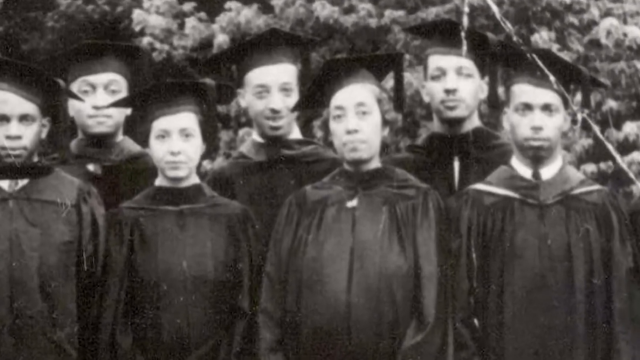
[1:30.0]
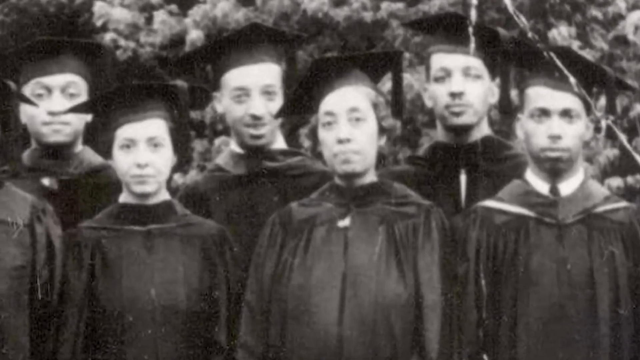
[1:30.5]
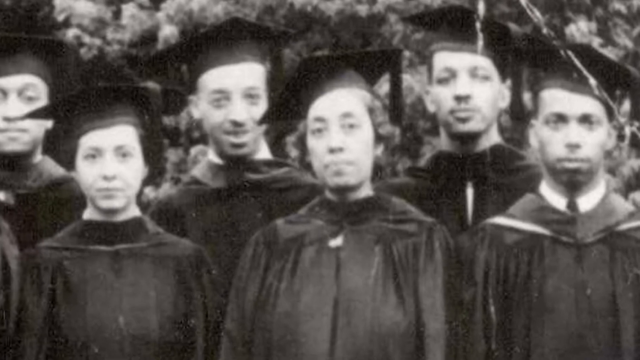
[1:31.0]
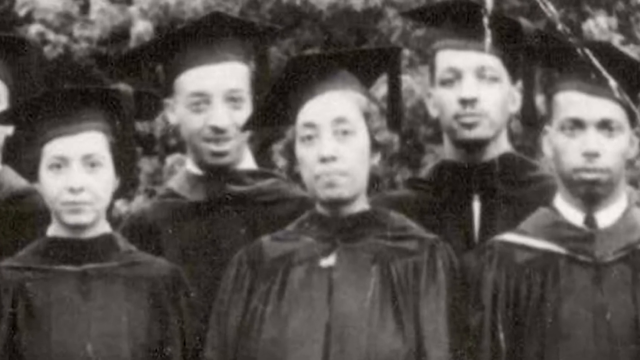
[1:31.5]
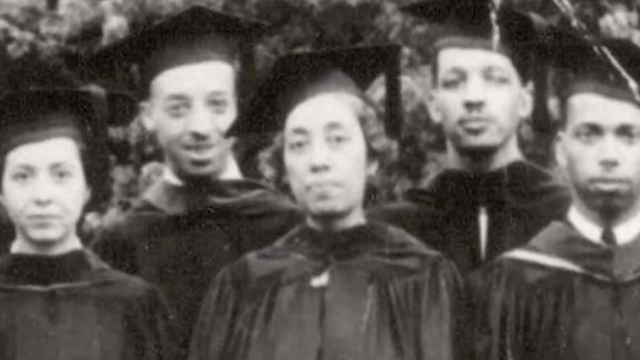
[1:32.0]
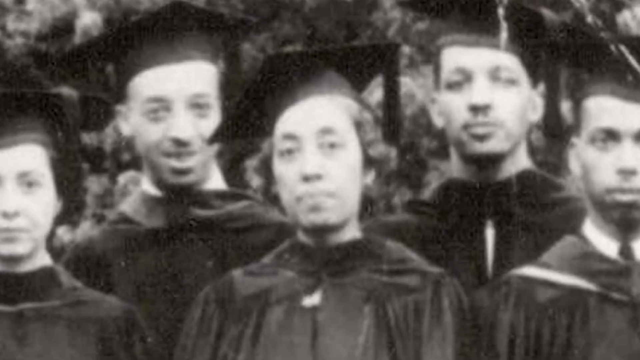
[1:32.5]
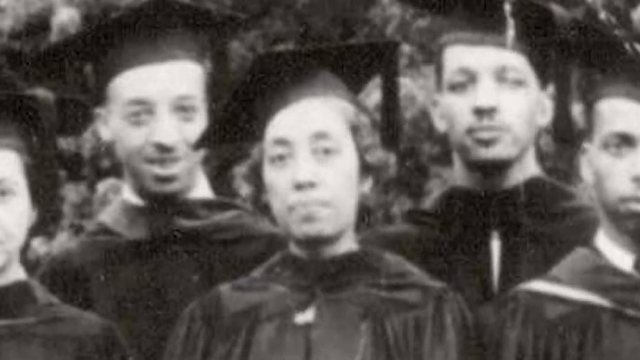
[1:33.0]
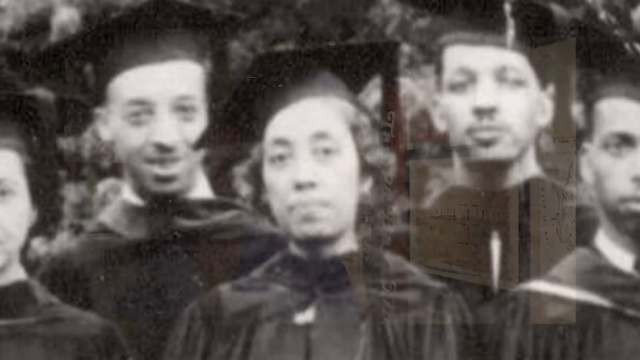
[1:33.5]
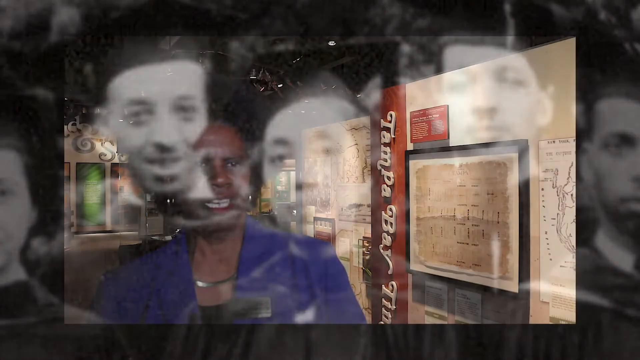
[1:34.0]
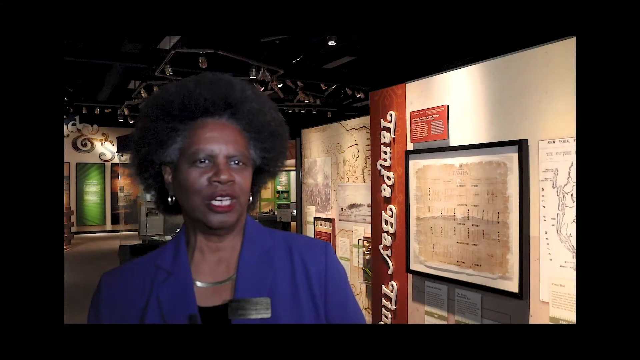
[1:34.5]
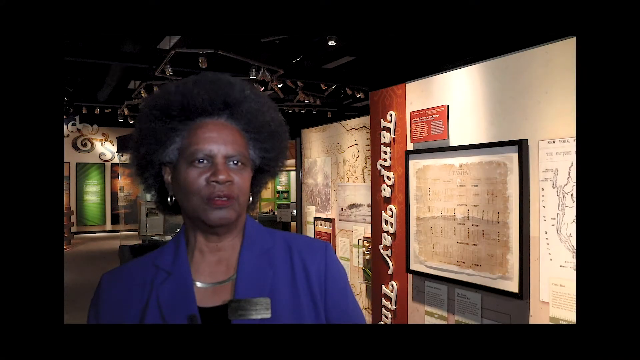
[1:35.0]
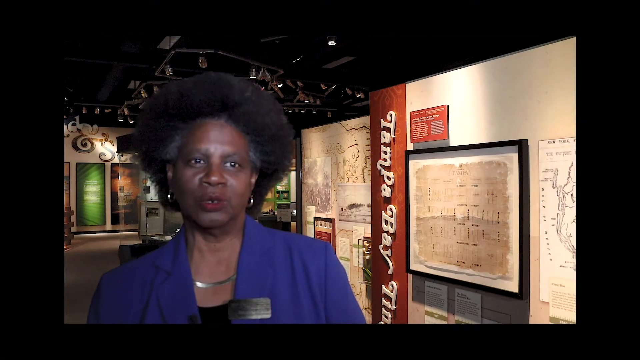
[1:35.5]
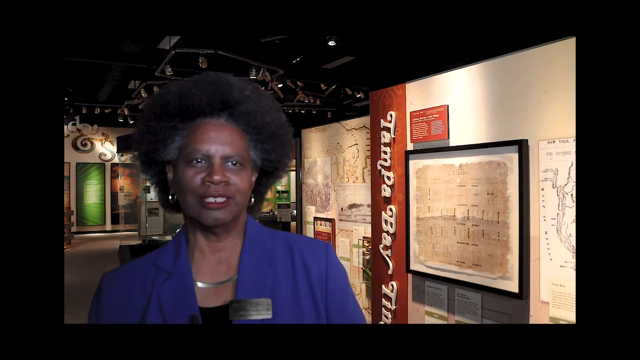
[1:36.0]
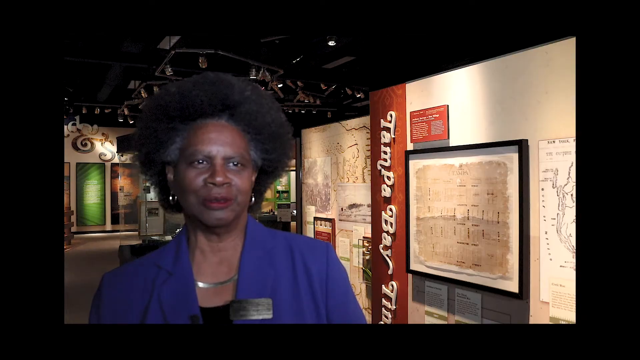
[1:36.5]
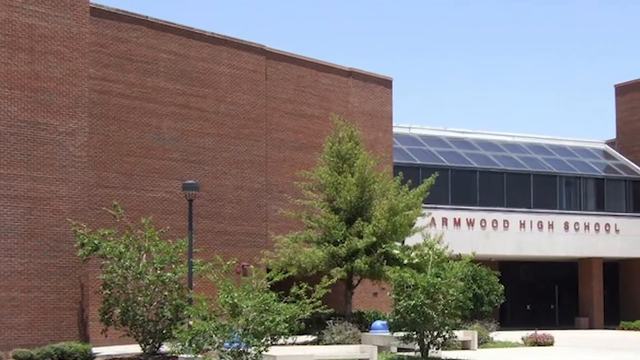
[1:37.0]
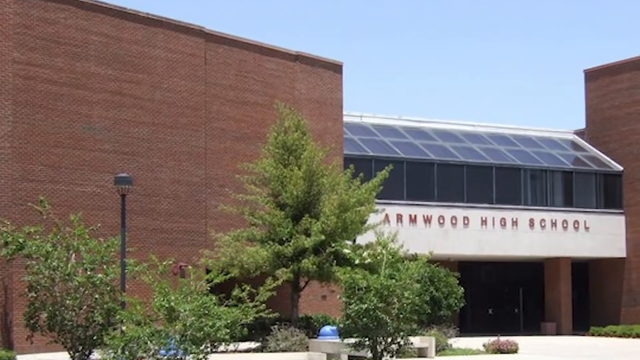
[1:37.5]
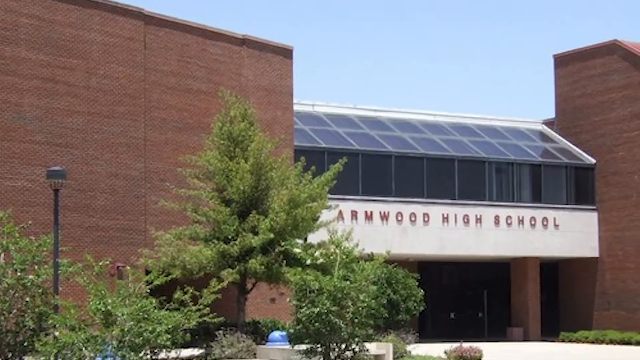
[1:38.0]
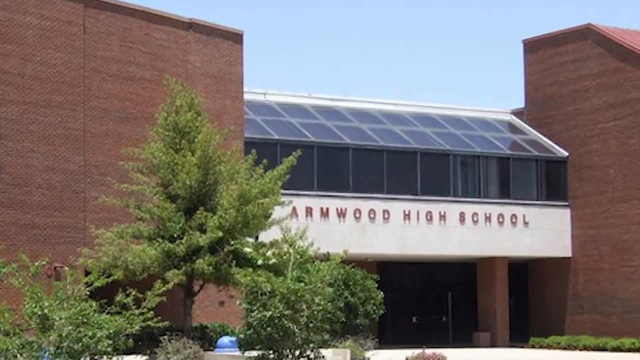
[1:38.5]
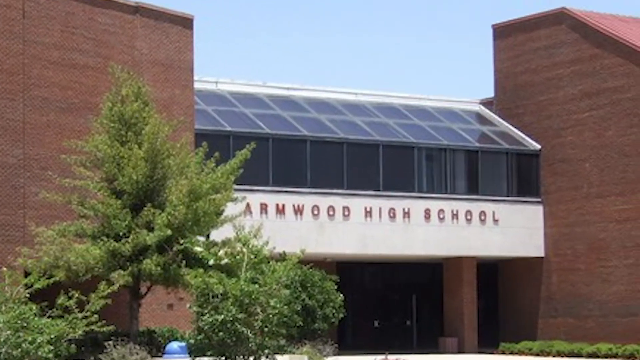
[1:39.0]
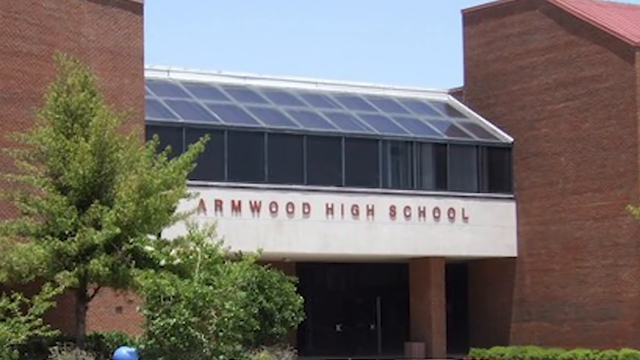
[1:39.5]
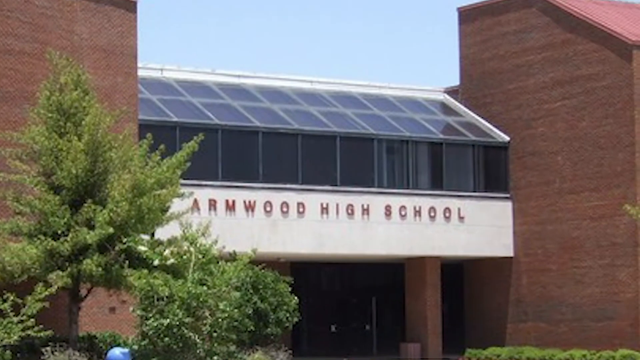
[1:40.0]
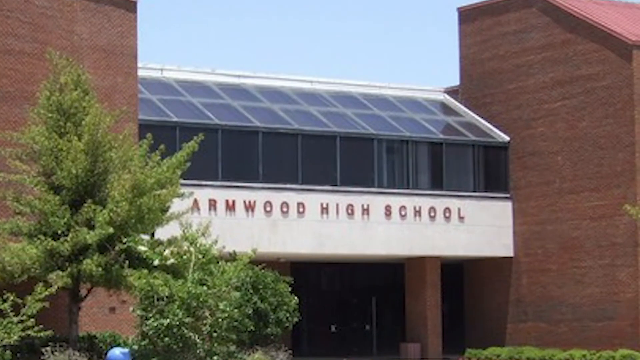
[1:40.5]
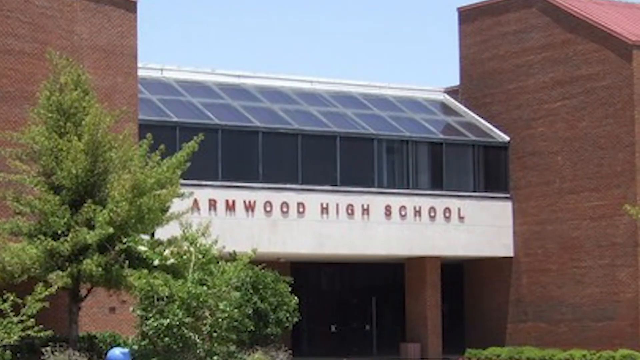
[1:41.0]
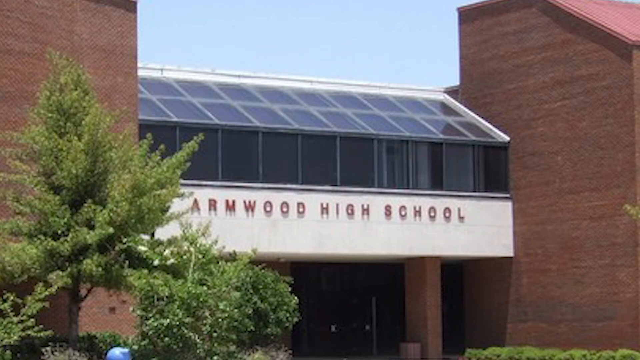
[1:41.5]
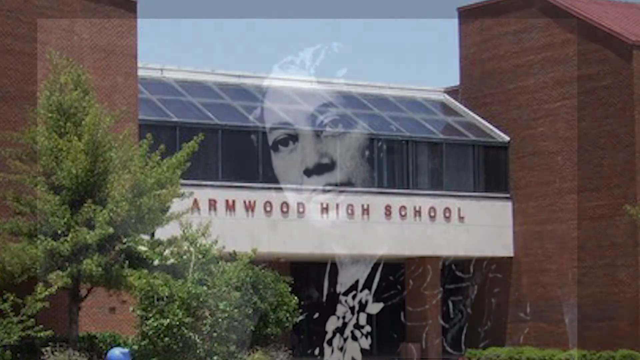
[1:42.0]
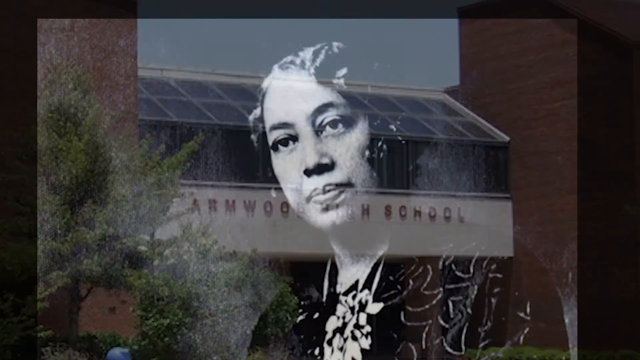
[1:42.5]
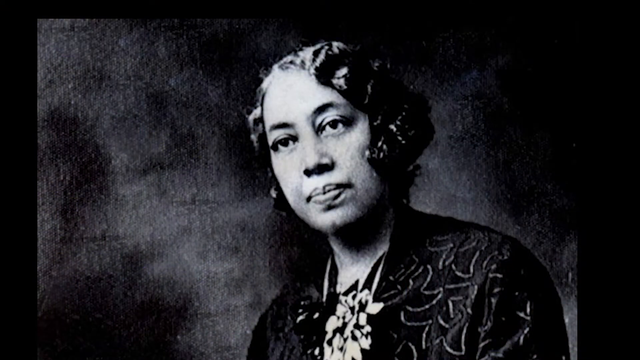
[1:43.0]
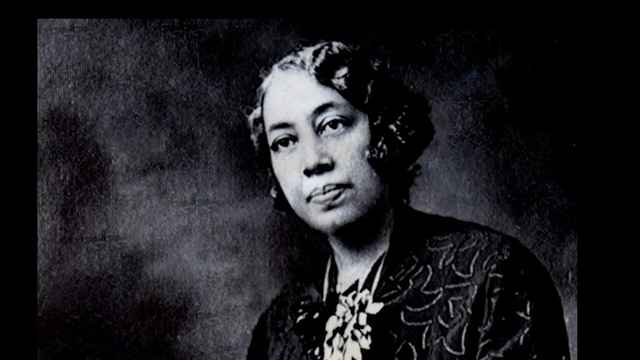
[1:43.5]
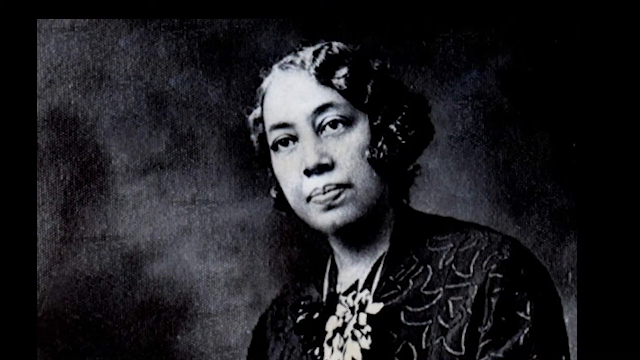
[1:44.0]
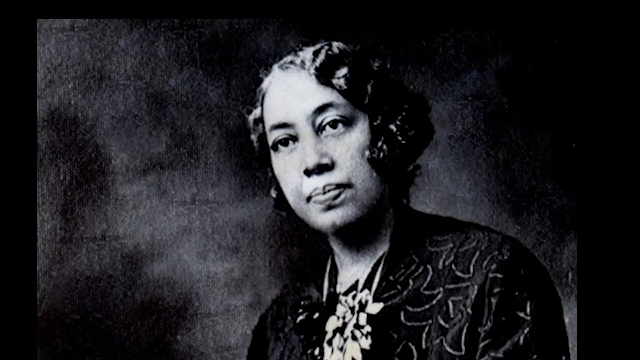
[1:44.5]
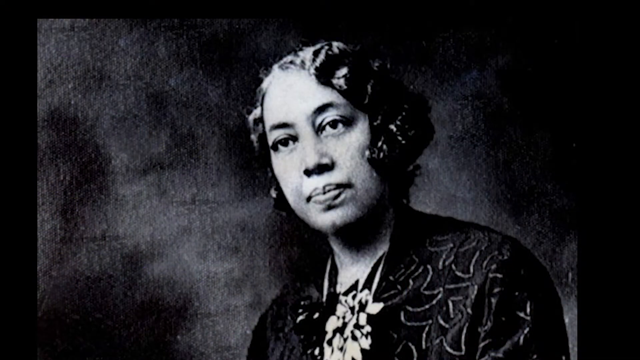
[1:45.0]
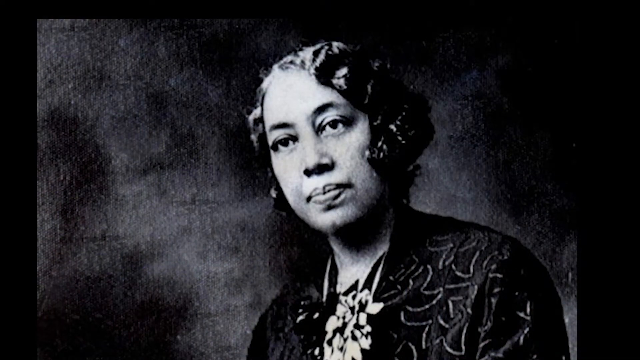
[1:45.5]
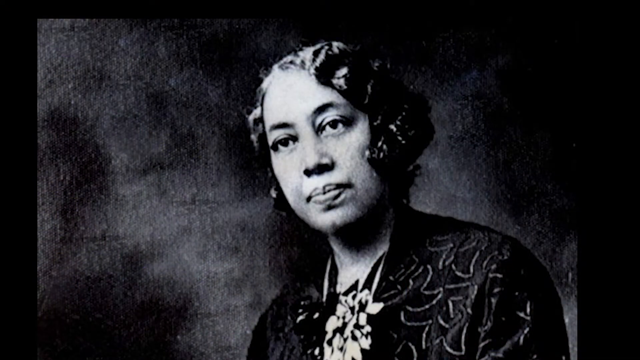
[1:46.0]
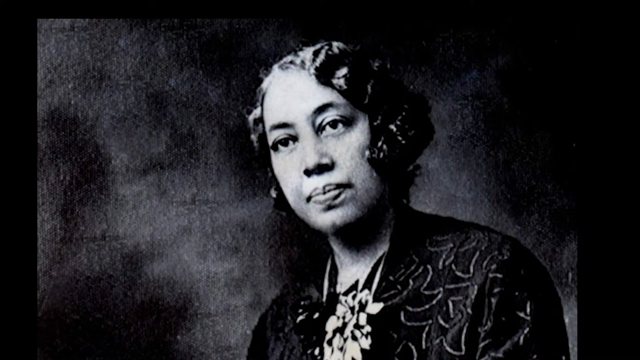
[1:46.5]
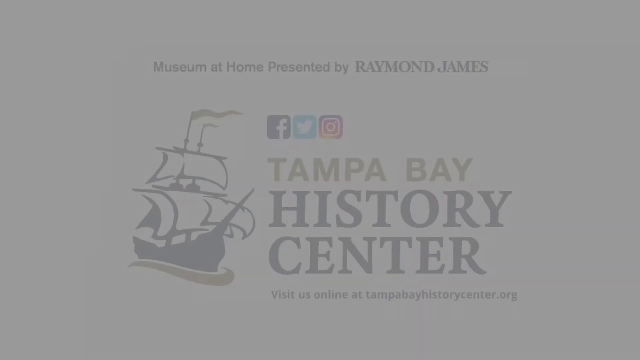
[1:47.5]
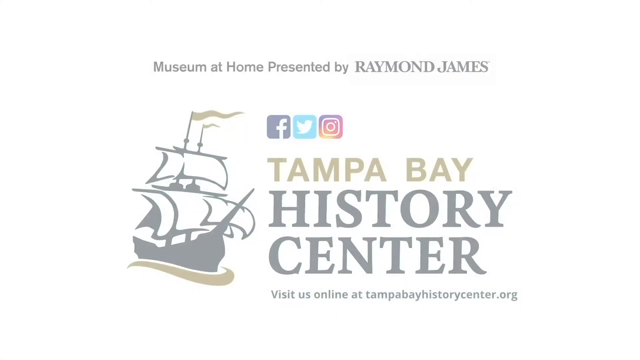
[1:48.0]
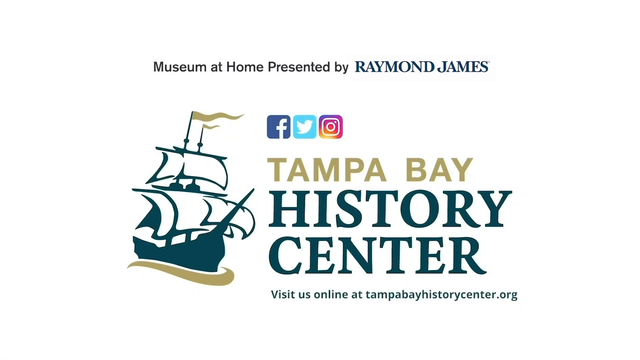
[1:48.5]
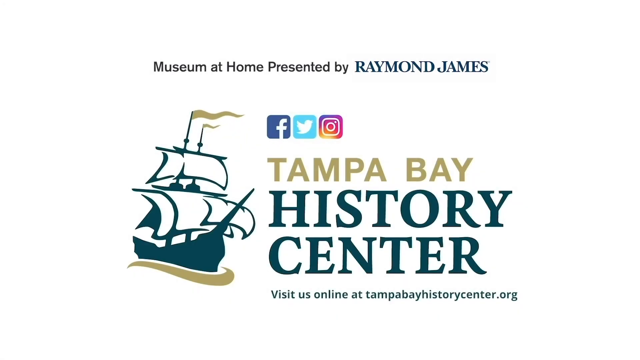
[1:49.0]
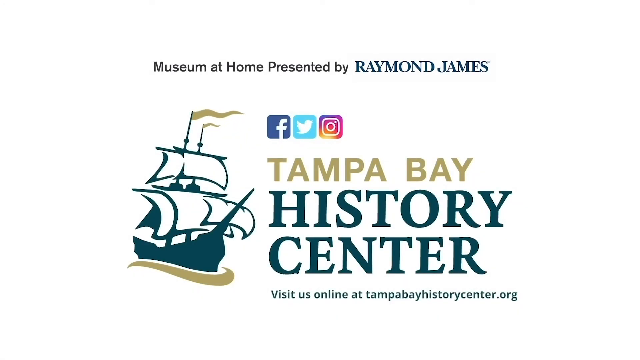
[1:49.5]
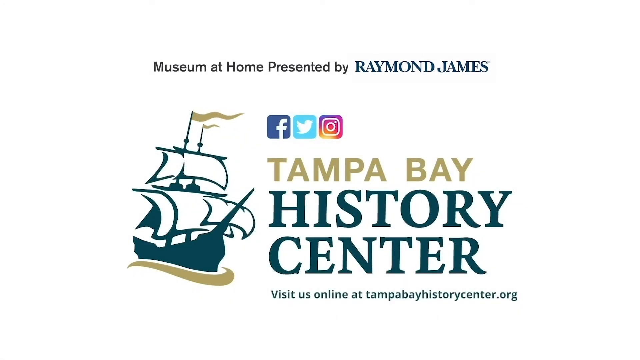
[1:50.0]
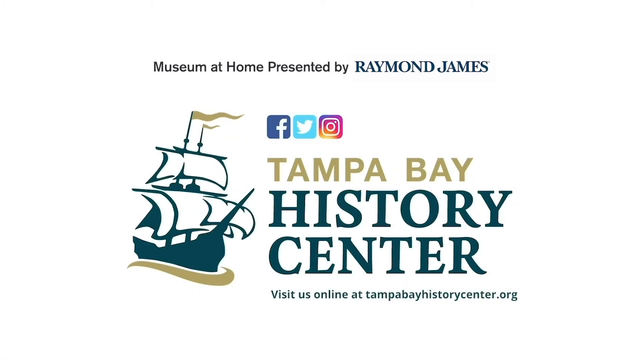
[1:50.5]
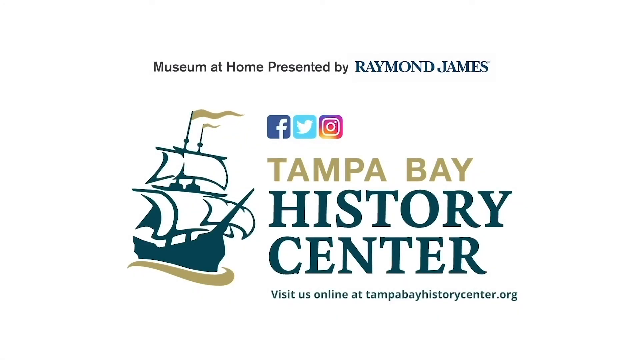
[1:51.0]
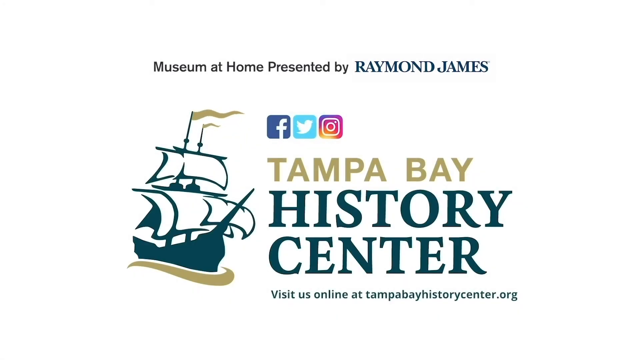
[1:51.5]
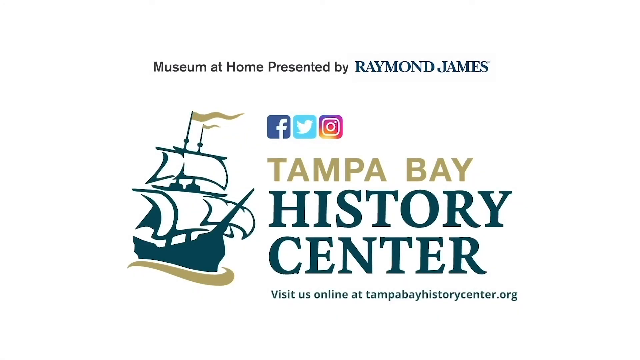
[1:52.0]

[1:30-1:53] What appear to be the teachers or professors for the school stand together in a black-and-white image, wearing black robes. It zooms in on one of the professors in particular and then goes back to Ersula. Next comes a high school, Armwood High School. A black-and-white picture follows of an African American woman with her head tilted to the side, kind of dressed up and kind of looking off. The next scene says "Museum at Home presented by Raymond James" and has kind of a sailboat drawn on it. Facebook, Twitter and Instagram symbols appear, along with the text "Tampa Bay History Center. Visit us online at tampabayhistorycenter.org."